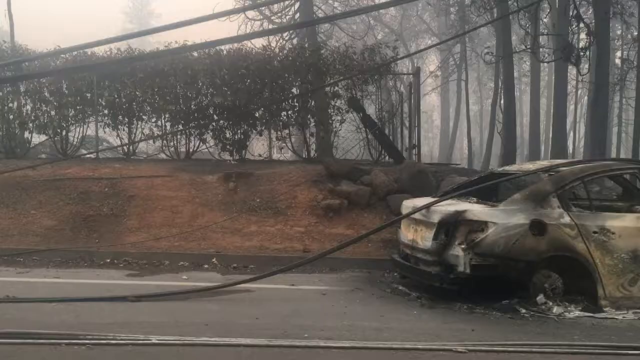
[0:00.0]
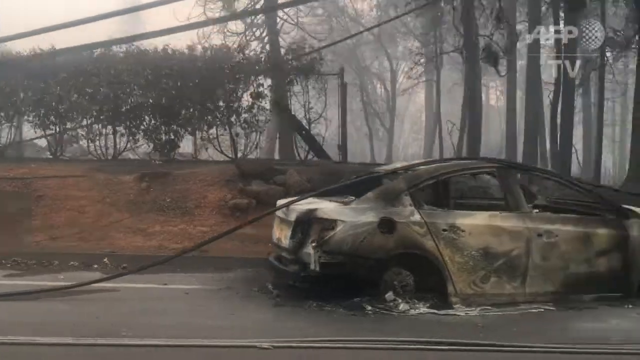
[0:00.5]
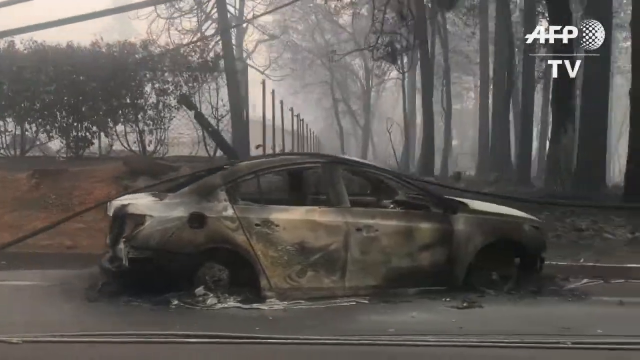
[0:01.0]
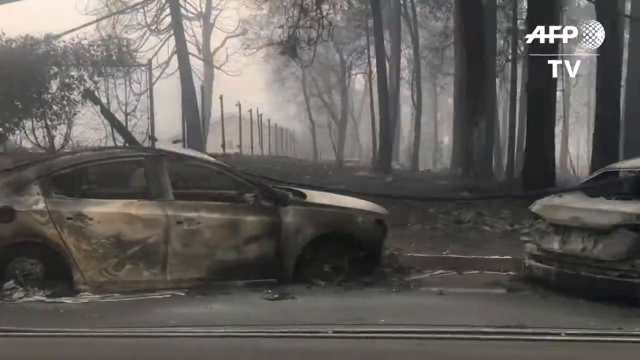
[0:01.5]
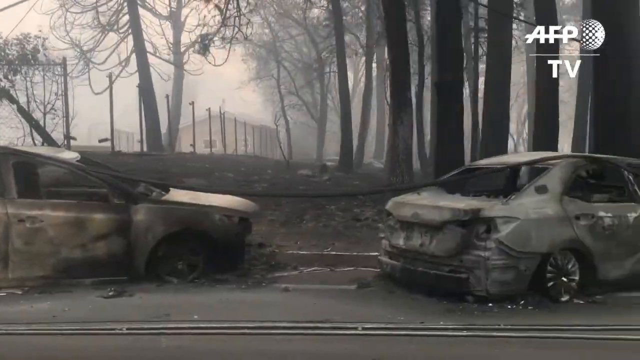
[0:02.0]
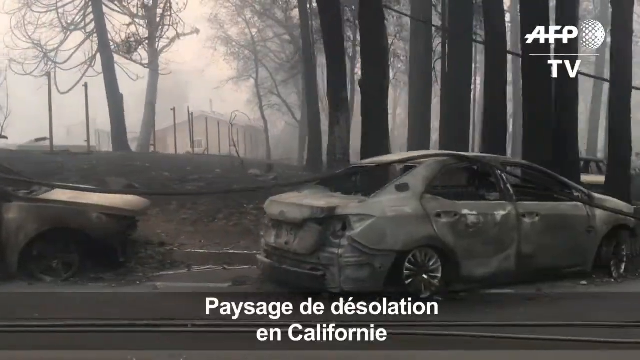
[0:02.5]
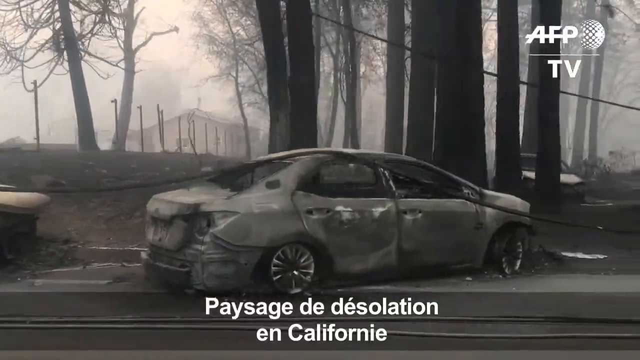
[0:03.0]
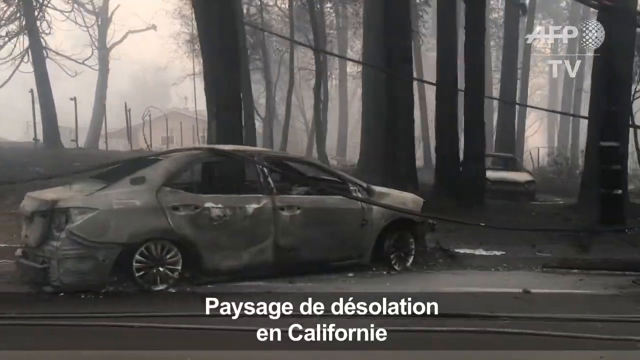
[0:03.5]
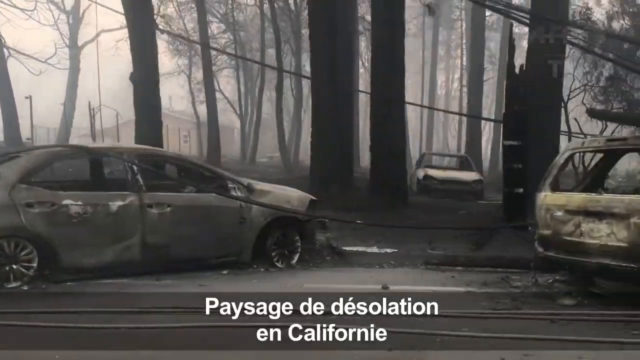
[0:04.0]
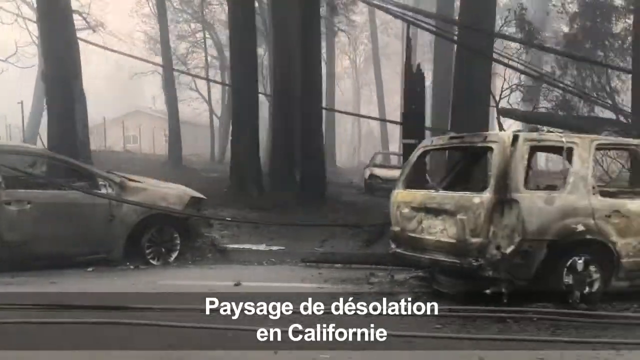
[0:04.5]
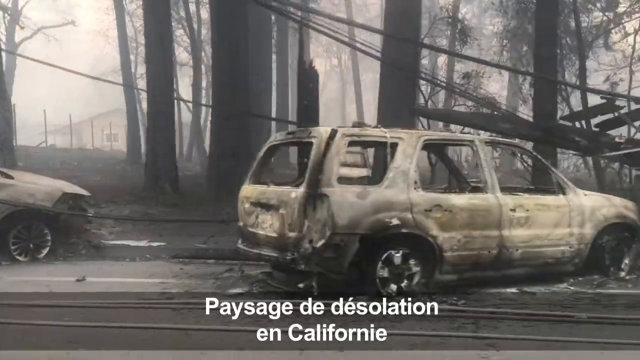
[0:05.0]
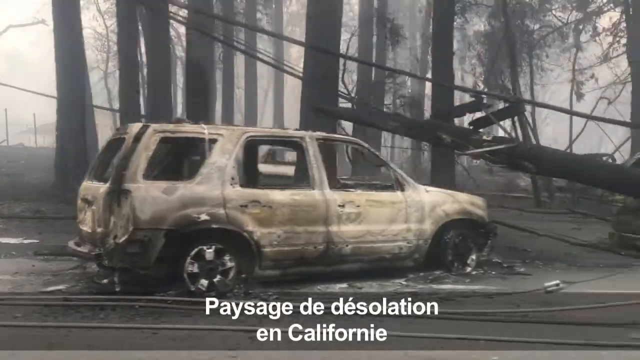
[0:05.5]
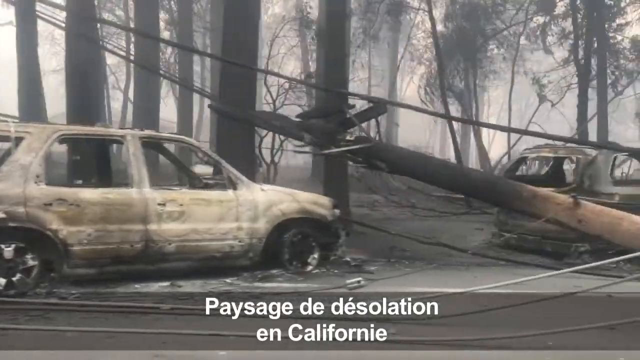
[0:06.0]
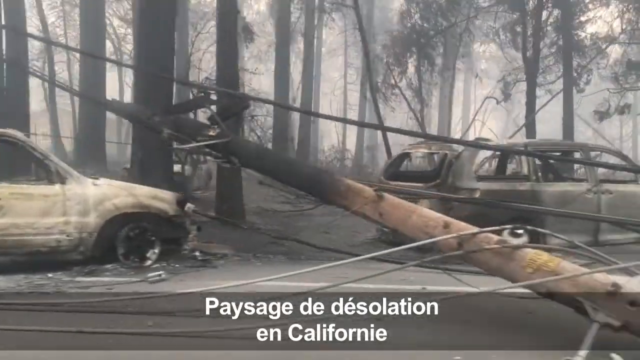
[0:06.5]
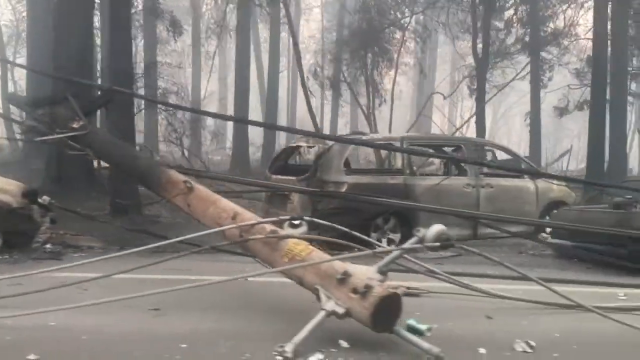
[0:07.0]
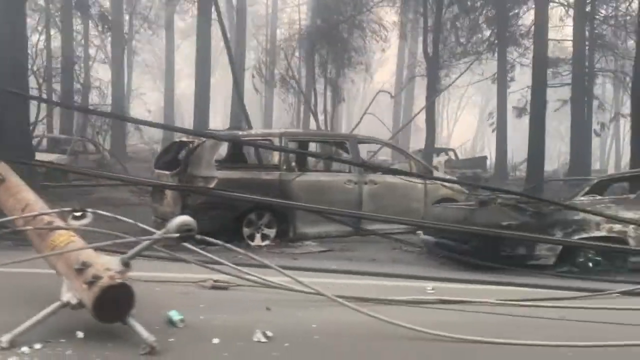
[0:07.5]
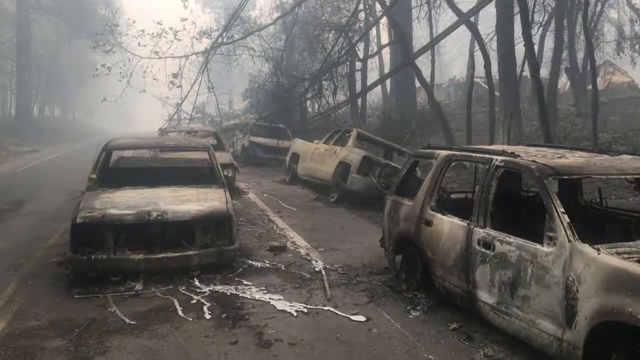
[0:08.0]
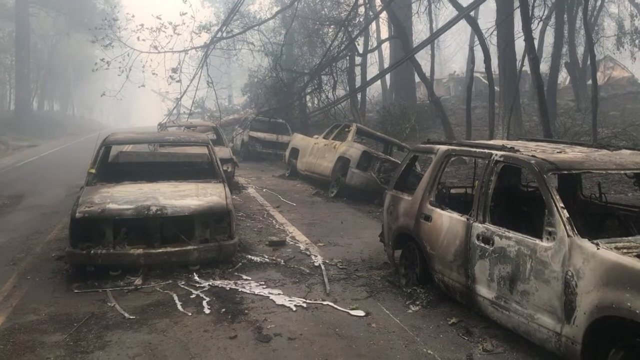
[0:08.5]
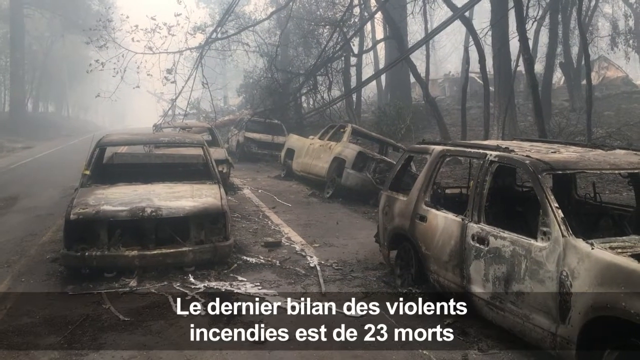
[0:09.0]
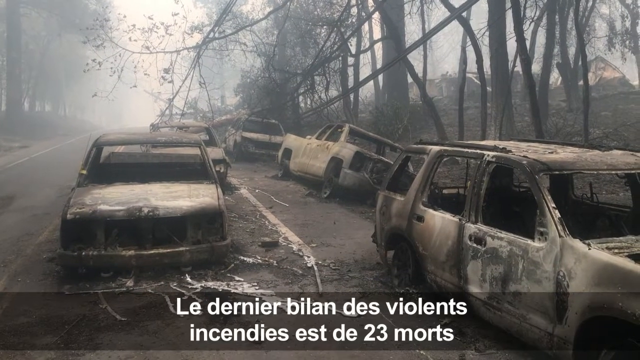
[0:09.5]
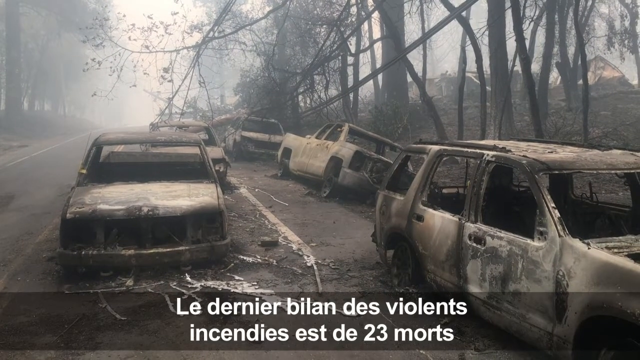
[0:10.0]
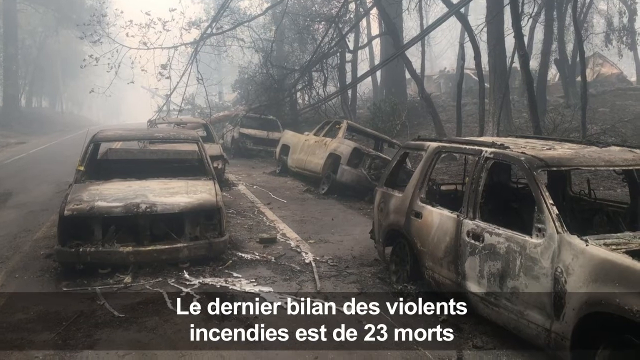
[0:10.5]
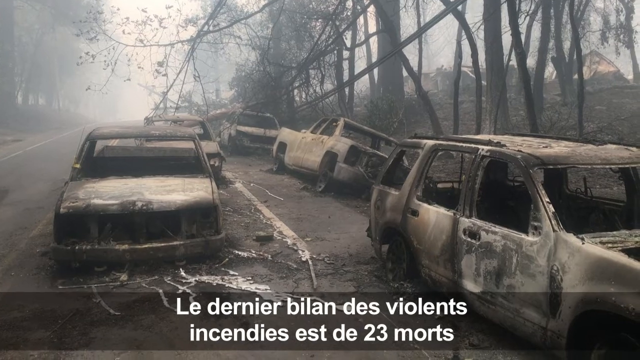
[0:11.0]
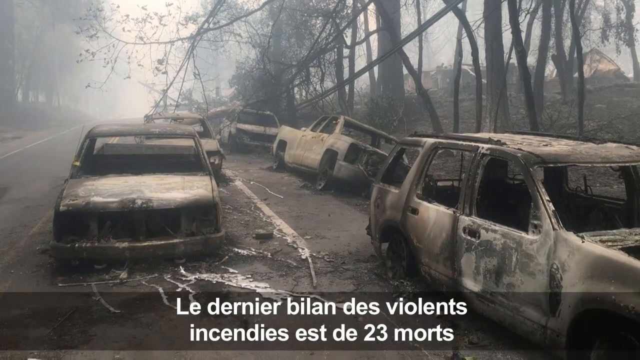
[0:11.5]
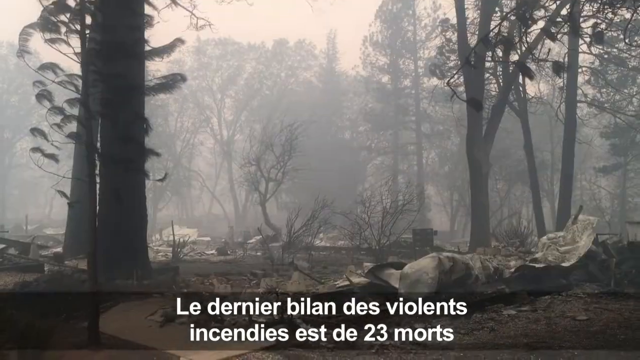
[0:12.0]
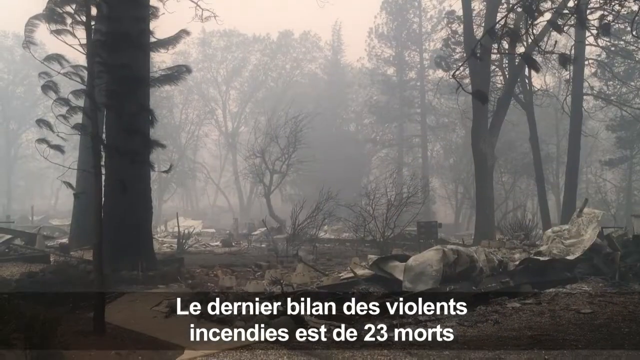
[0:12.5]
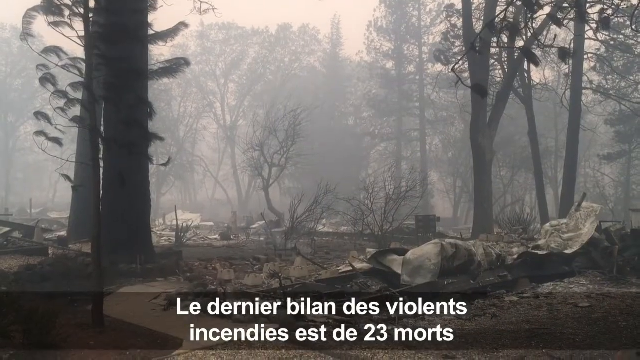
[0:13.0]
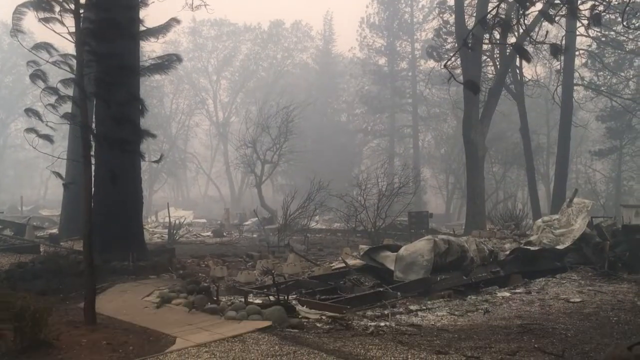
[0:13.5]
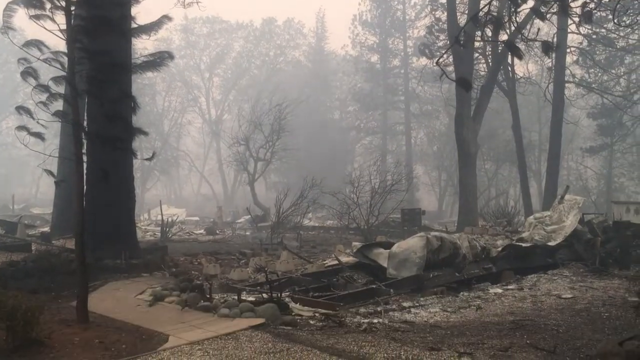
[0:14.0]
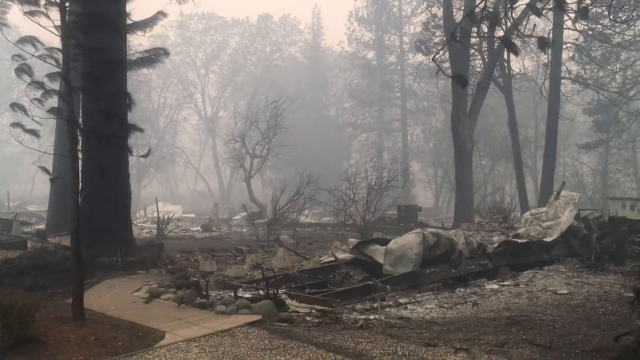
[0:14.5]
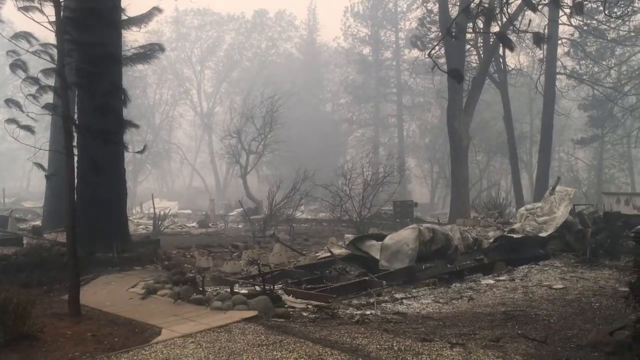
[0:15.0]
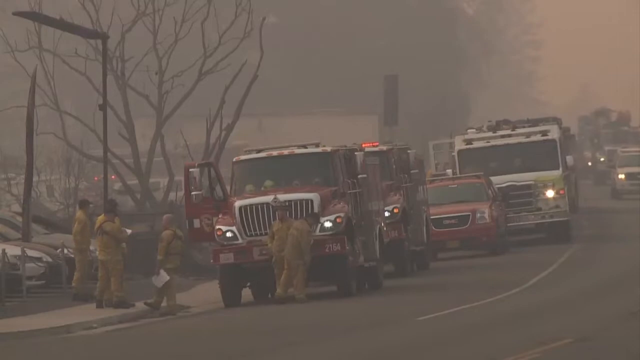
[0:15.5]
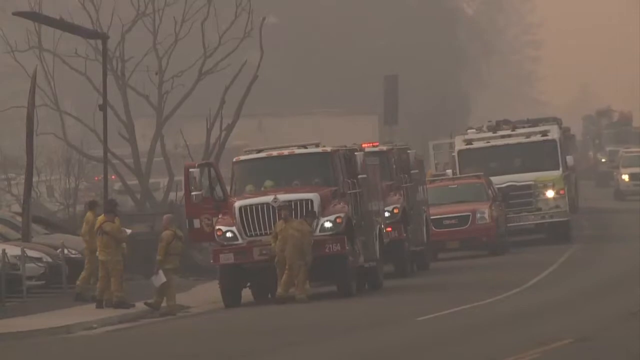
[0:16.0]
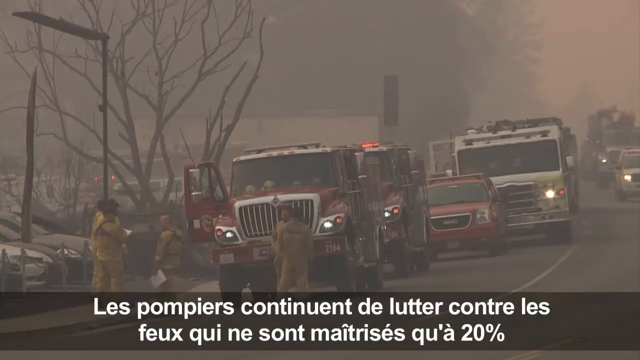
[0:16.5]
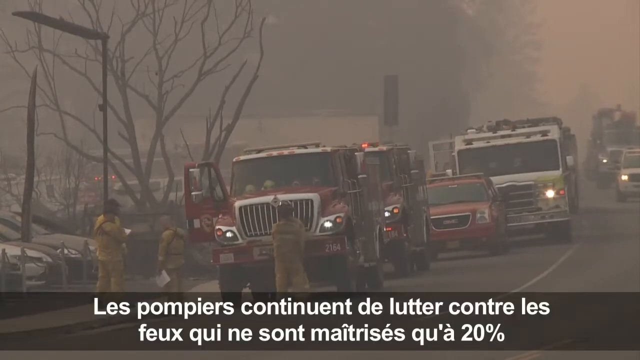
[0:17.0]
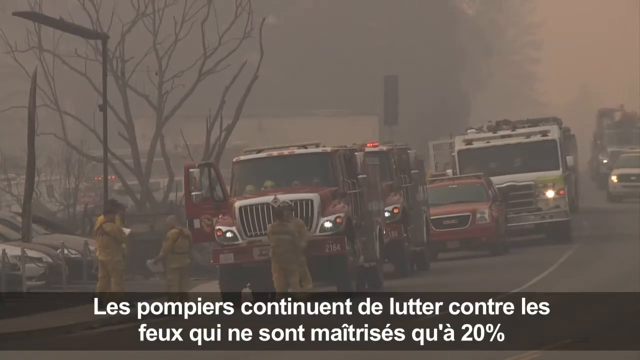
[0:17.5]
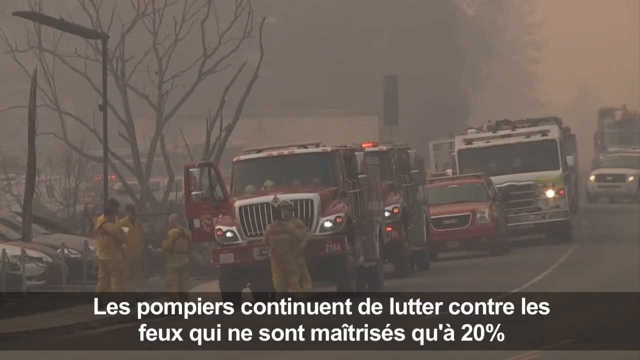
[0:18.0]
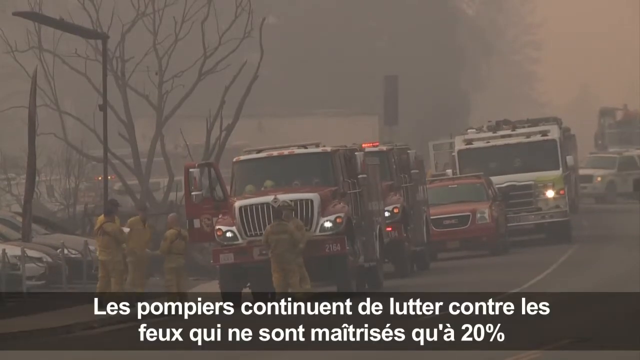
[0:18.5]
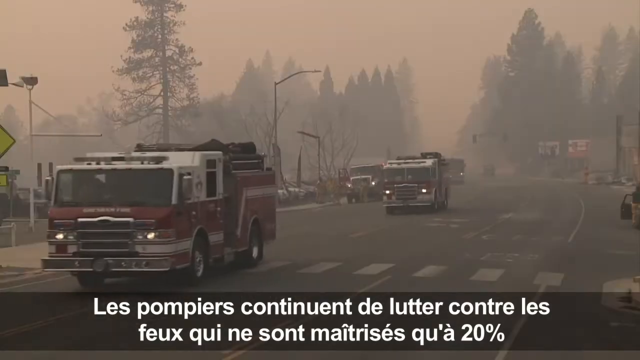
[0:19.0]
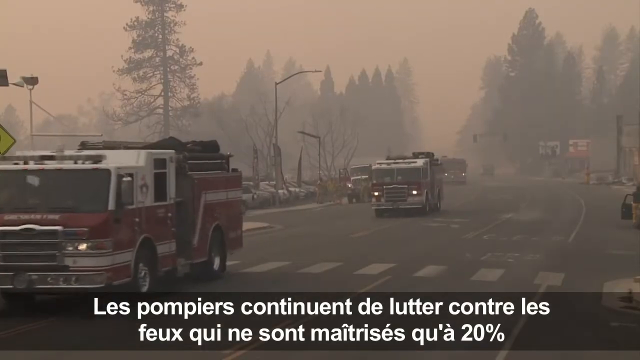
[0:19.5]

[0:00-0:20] The scene shows a landscape of devastation in California. Burnt cars are visible, and it seems like a car accident happened at this place. Trees have fallen, and there are traffic lights where the burnt, destroyed cars are. The cars are demolished and the whole area is burnt, though some cars are moving from one place to another. The roads are demolished, the trees are burned, and everything looks misty and dusty. The trees are still standing, but many of them are bent.